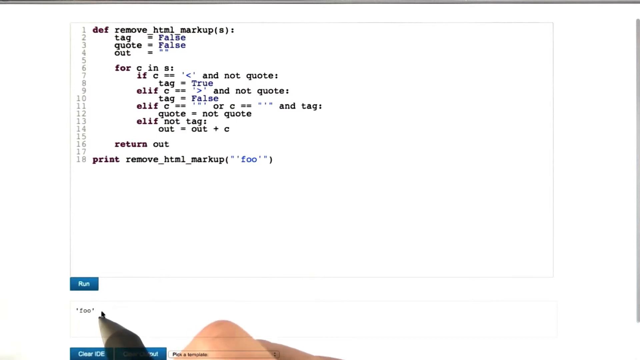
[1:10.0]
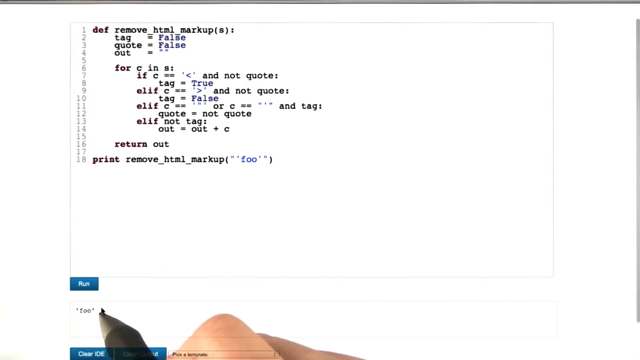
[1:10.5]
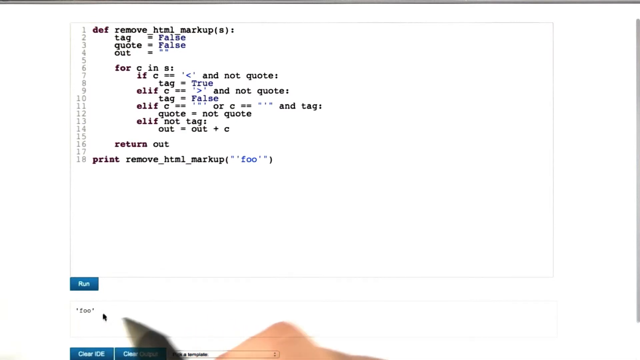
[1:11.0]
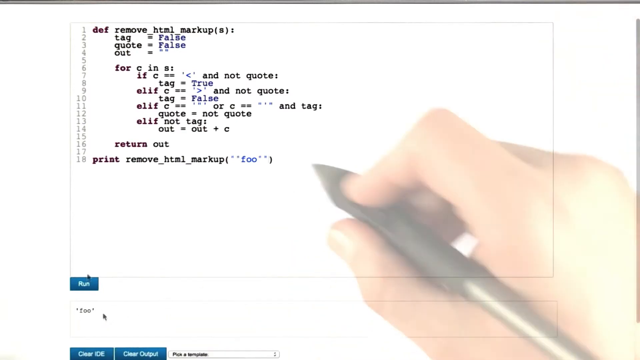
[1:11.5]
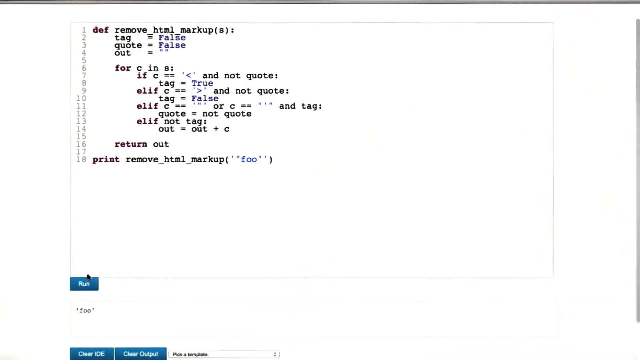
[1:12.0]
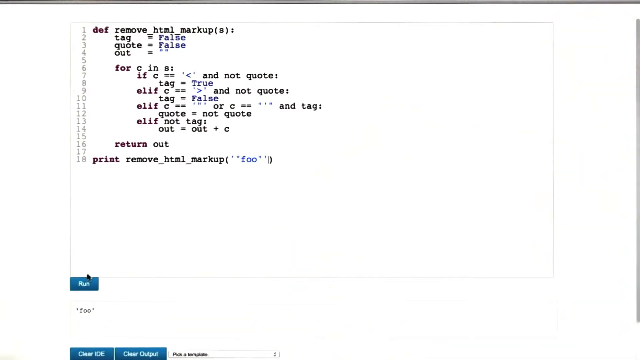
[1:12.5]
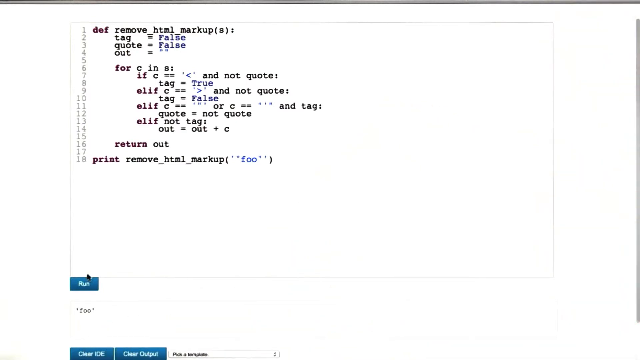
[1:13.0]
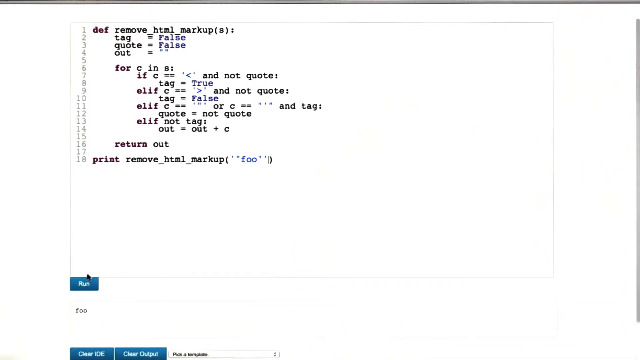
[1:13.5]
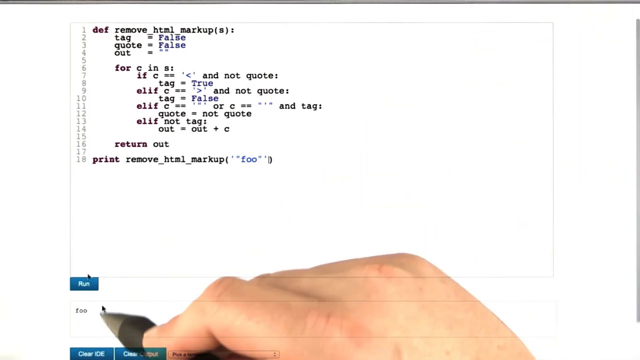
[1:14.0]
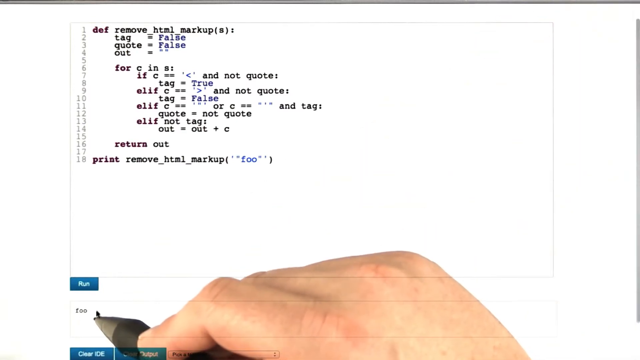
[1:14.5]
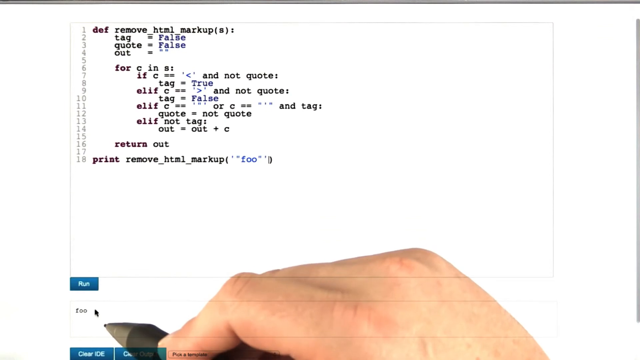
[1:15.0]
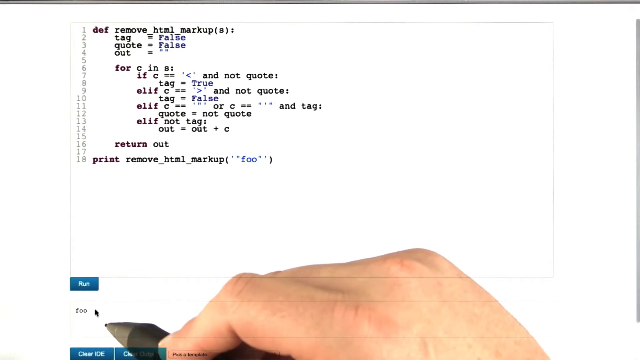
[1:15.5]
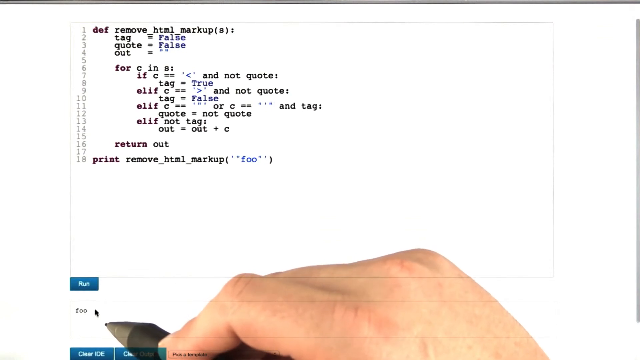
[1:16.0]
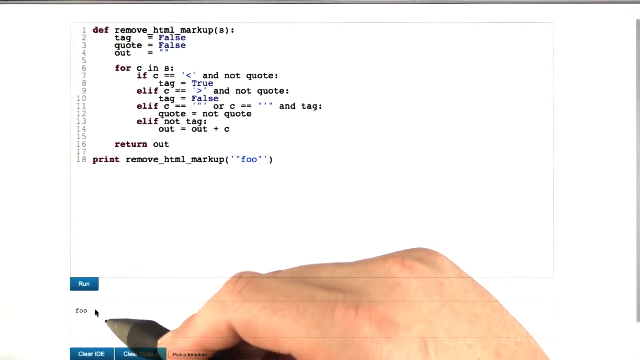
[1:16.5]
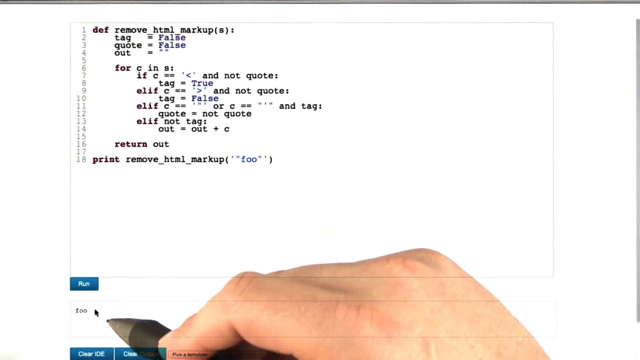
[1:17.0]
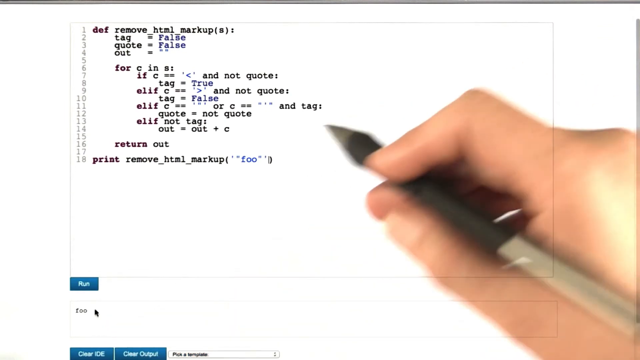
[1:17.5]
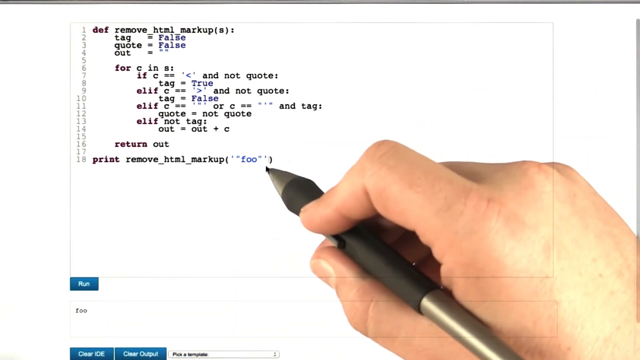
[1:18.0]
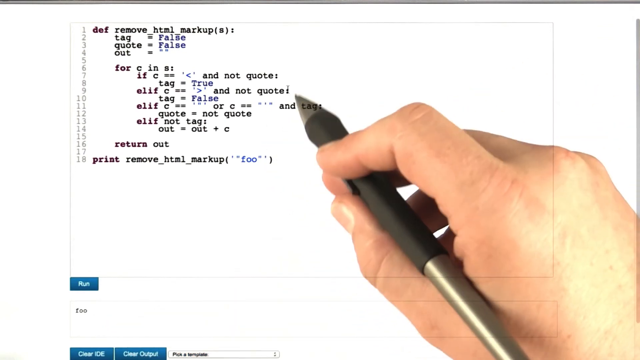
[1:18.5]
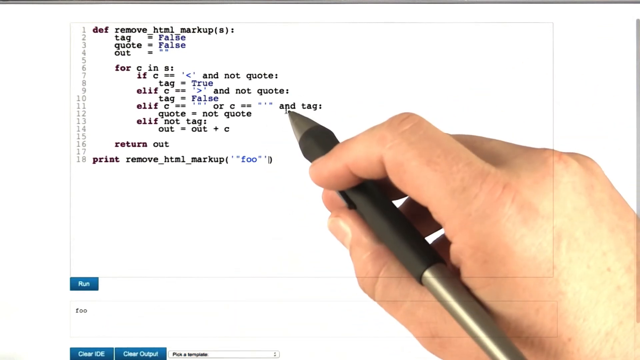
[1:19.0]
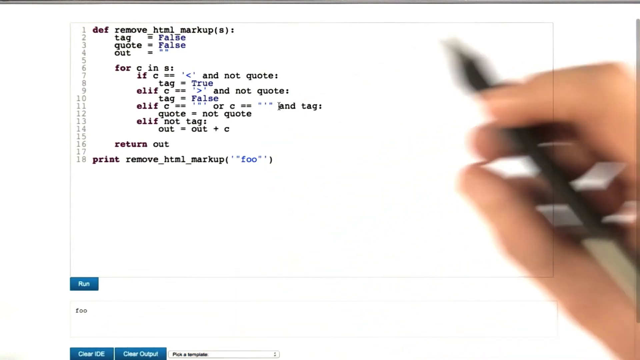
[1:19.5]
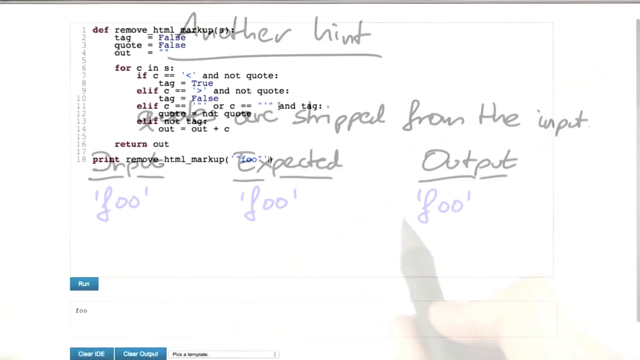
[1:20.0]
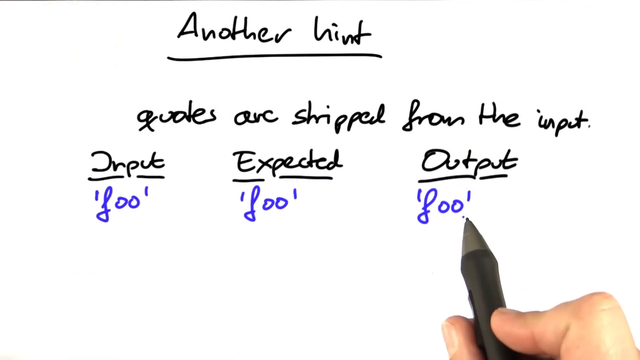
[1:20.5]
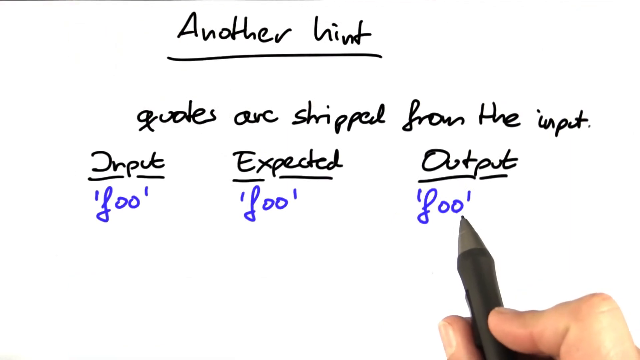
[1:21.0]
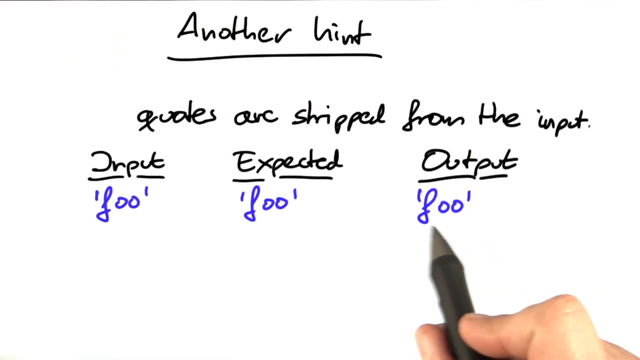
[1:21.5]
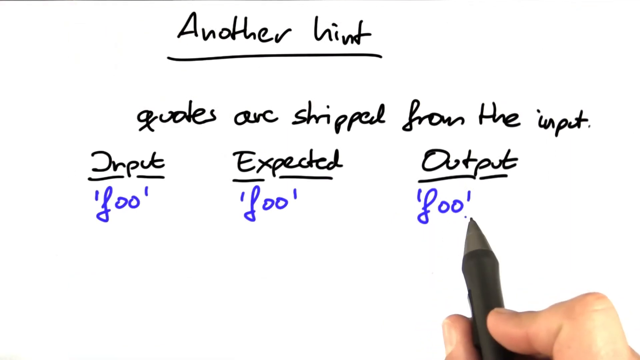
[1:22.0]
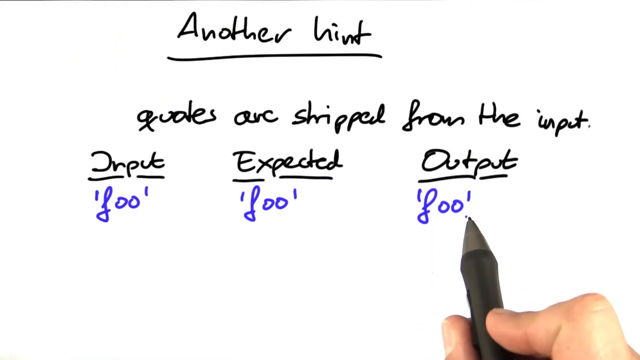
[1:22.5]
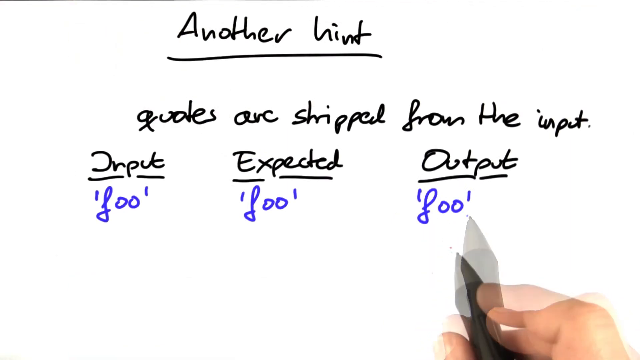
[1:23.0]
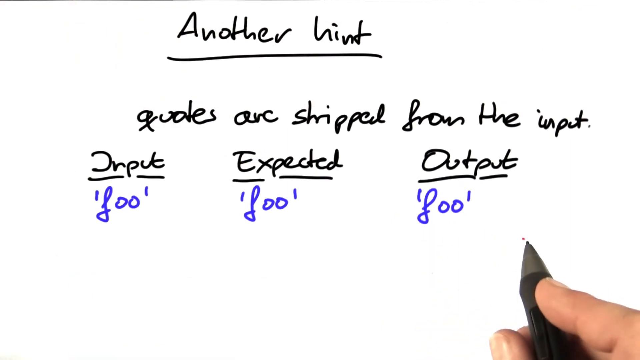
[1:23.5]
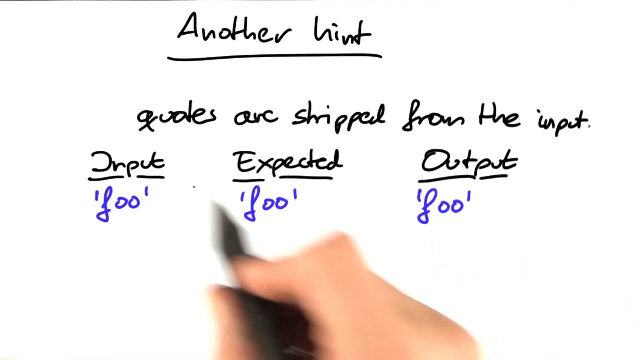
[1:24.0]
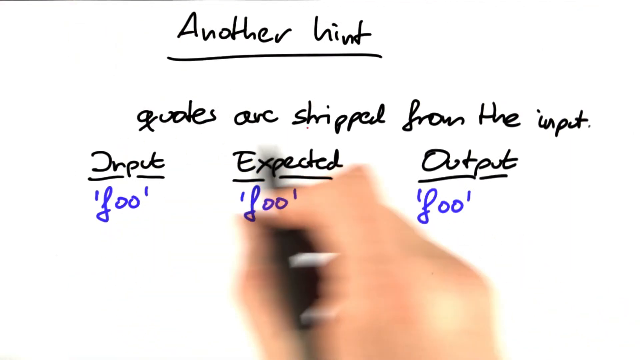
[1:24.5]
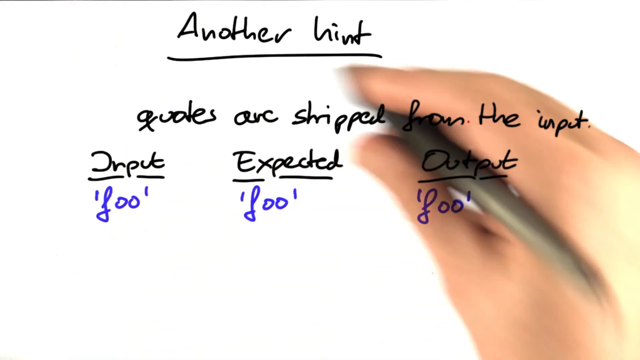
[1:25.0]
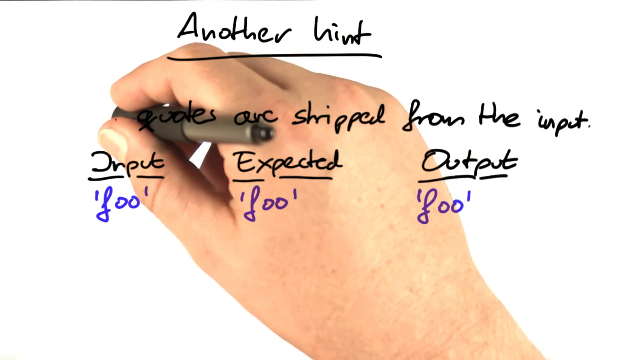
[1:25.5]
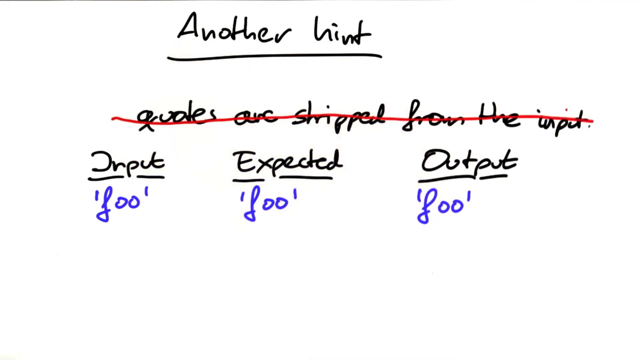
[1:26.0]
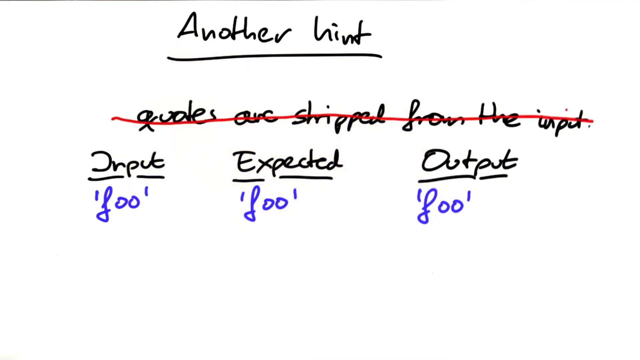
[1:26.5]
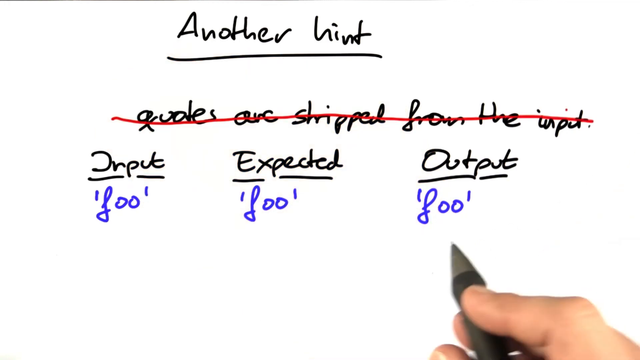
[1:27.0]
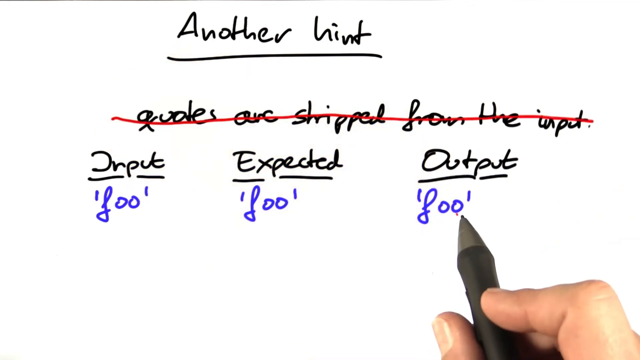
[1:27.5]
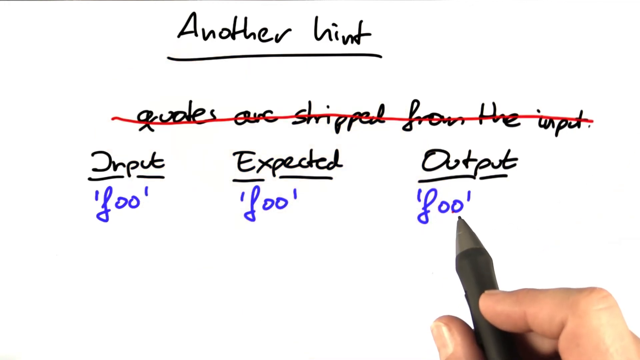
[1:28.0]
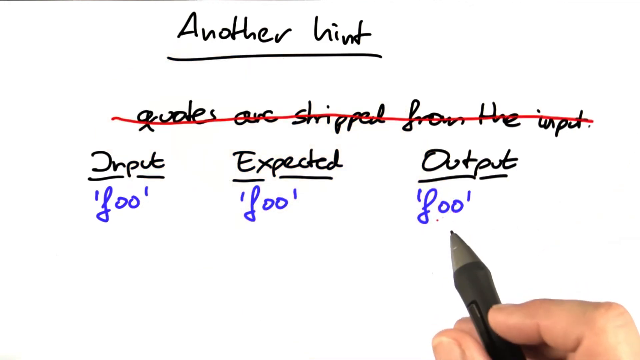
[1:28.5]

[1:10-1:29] Writing continues on the board, with another hint about what is stripped from the input, along with input and expected output. Some calculations are being done, and it looks a bit complicated.